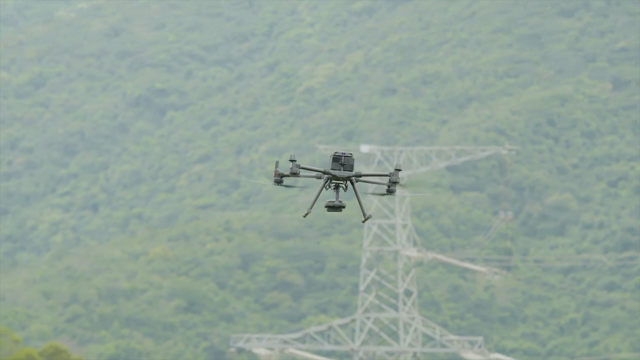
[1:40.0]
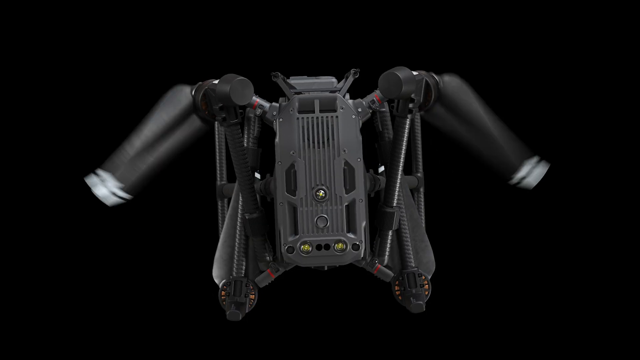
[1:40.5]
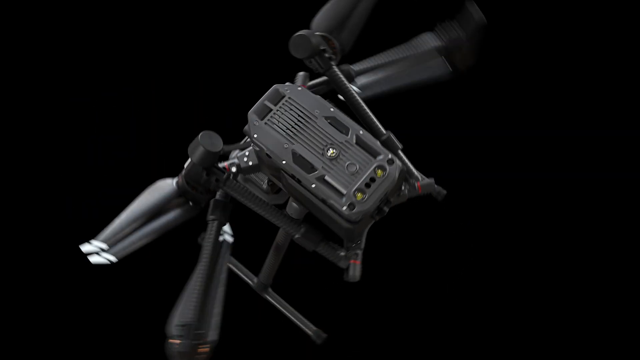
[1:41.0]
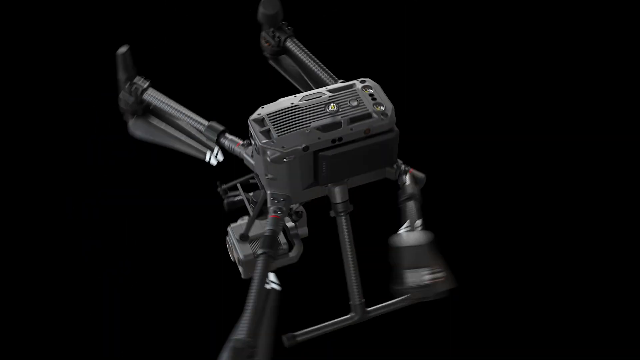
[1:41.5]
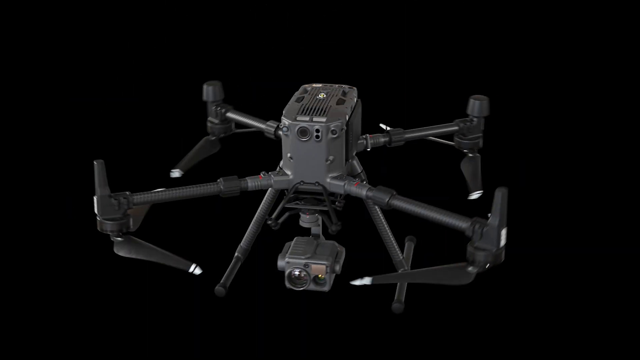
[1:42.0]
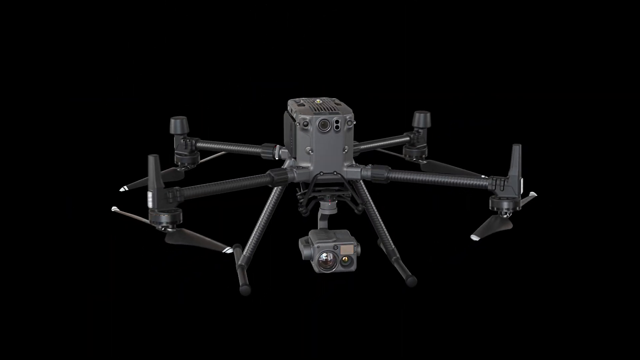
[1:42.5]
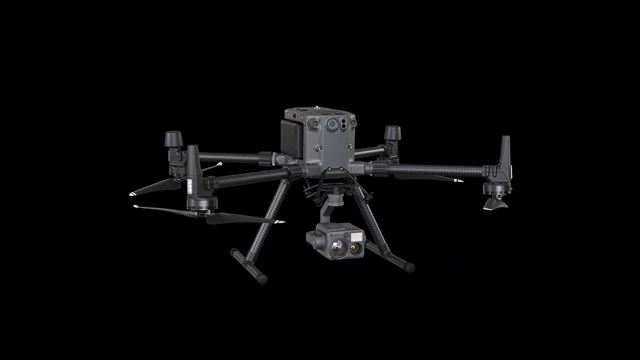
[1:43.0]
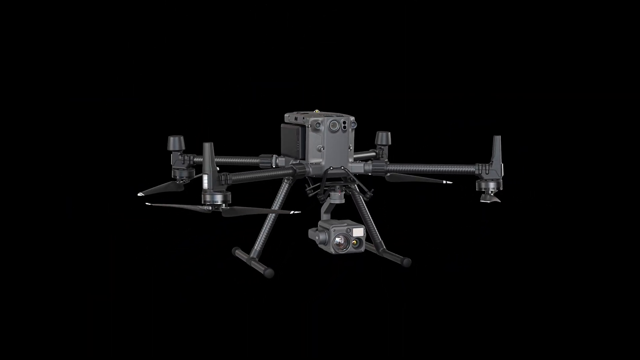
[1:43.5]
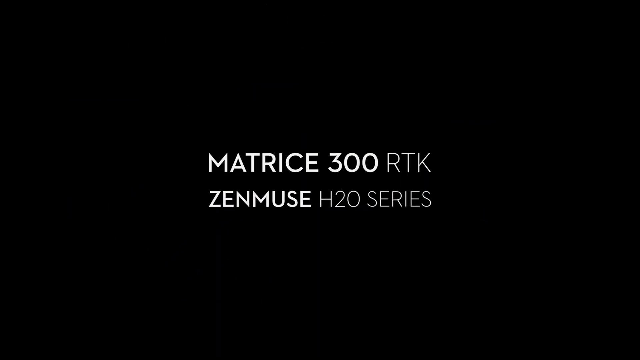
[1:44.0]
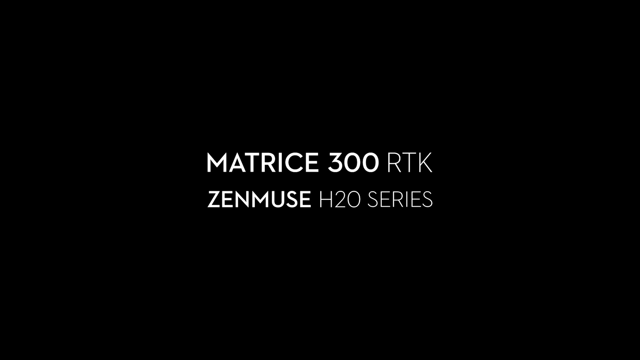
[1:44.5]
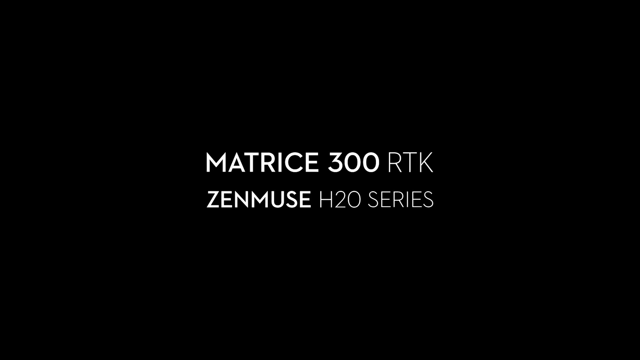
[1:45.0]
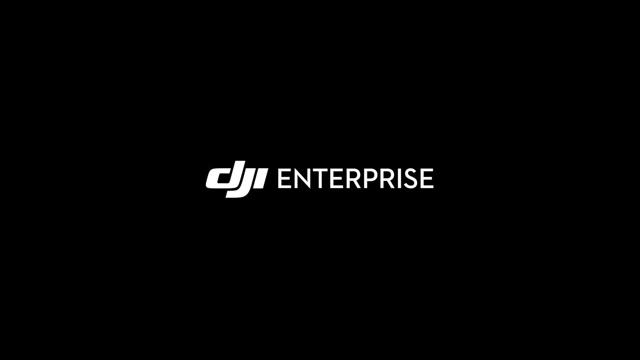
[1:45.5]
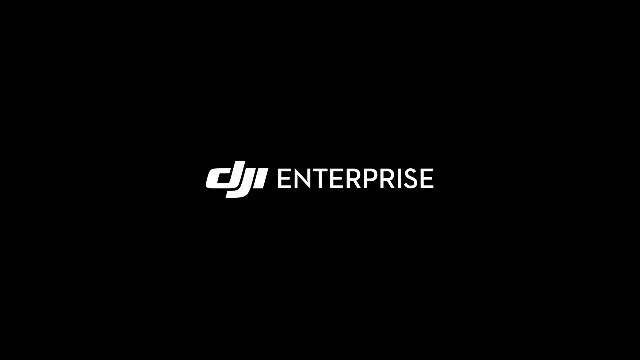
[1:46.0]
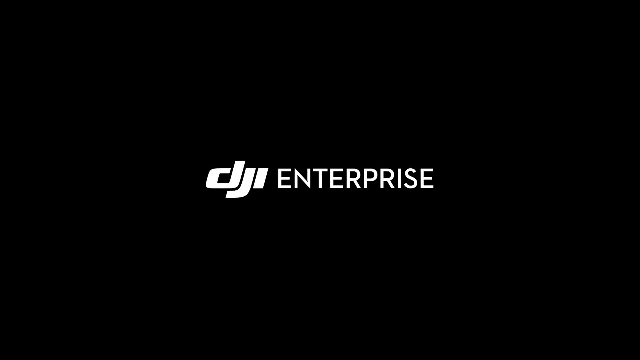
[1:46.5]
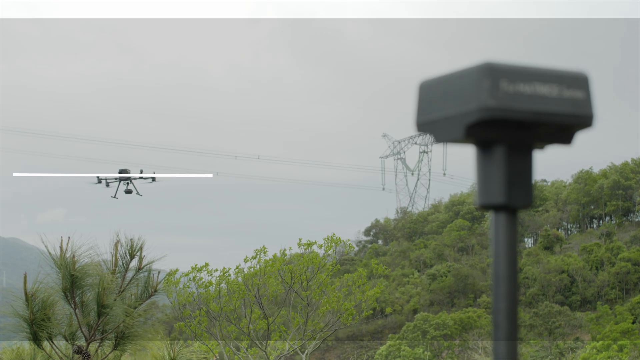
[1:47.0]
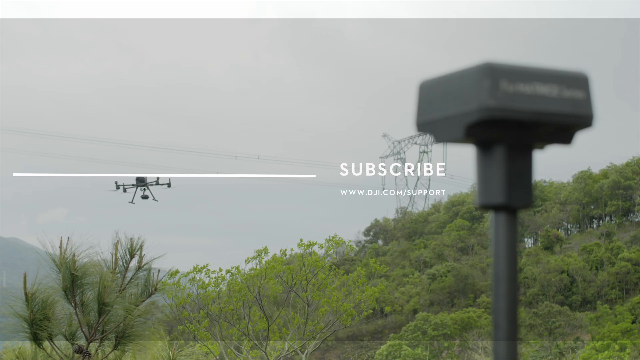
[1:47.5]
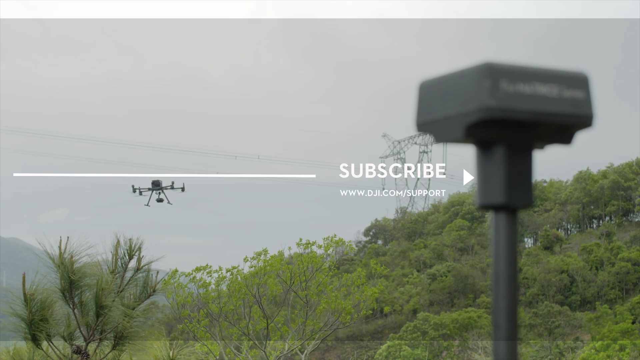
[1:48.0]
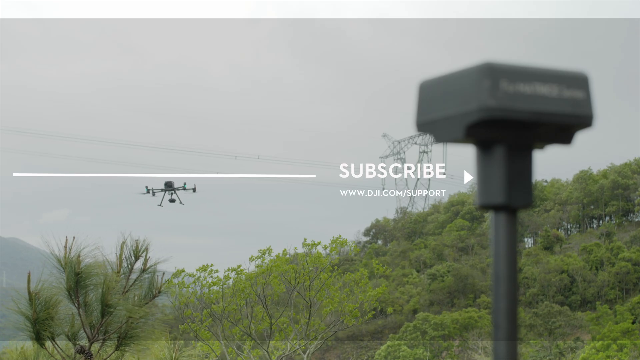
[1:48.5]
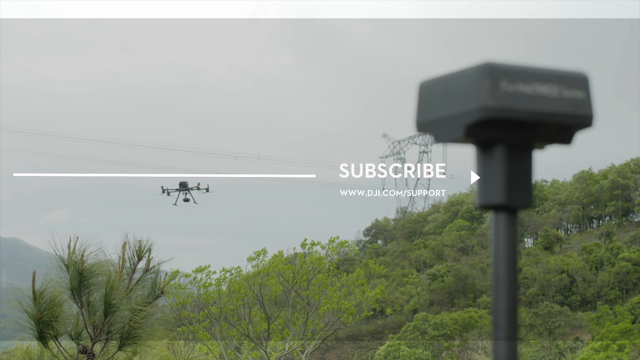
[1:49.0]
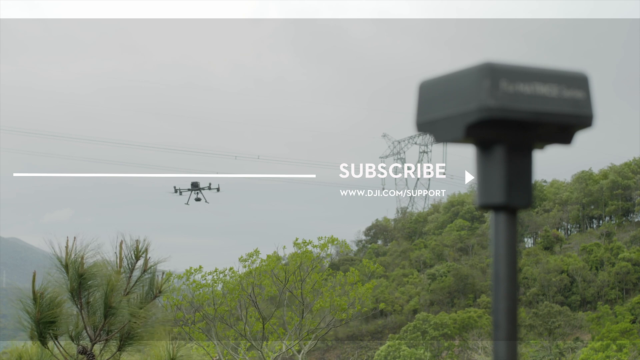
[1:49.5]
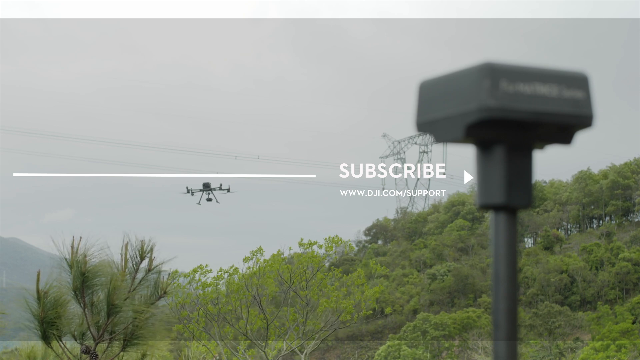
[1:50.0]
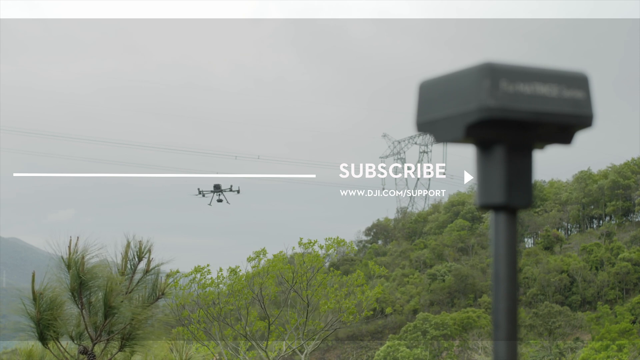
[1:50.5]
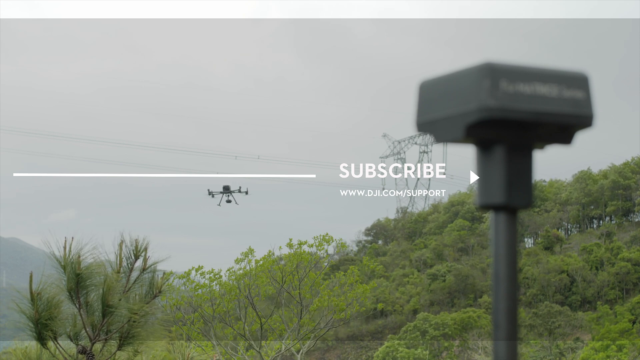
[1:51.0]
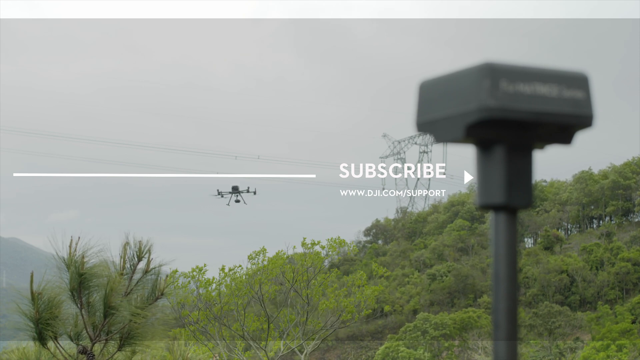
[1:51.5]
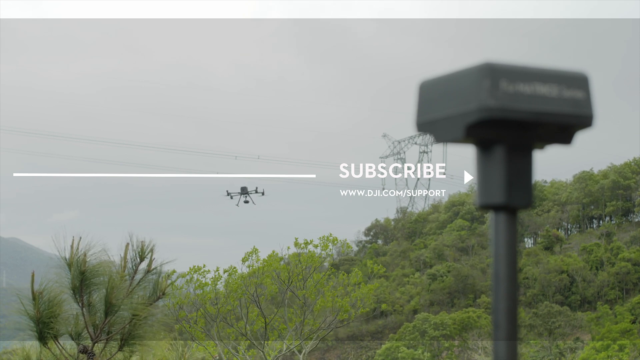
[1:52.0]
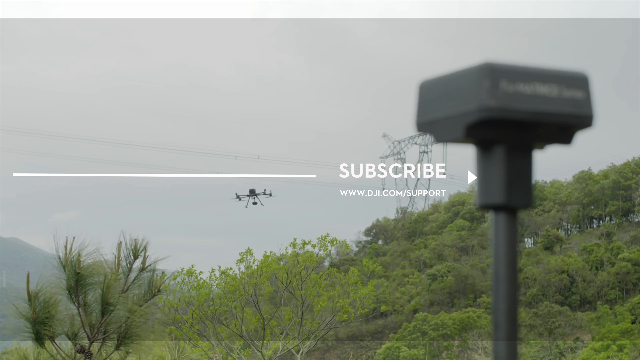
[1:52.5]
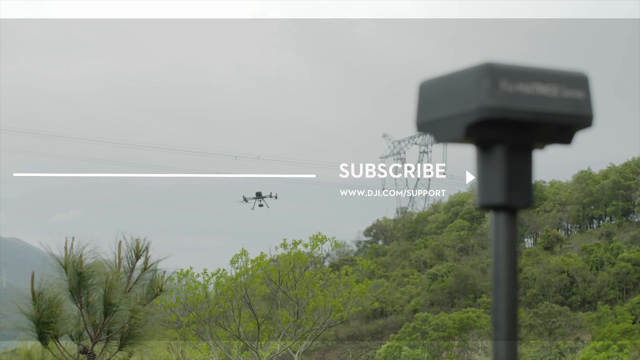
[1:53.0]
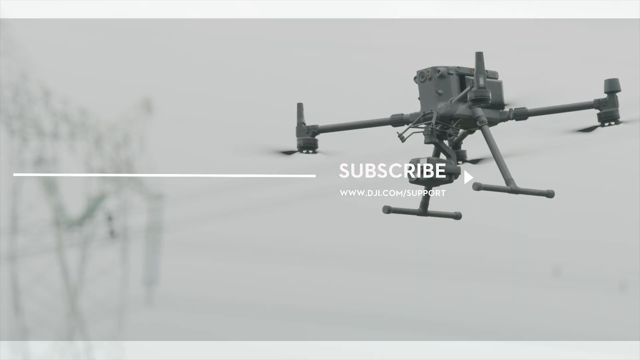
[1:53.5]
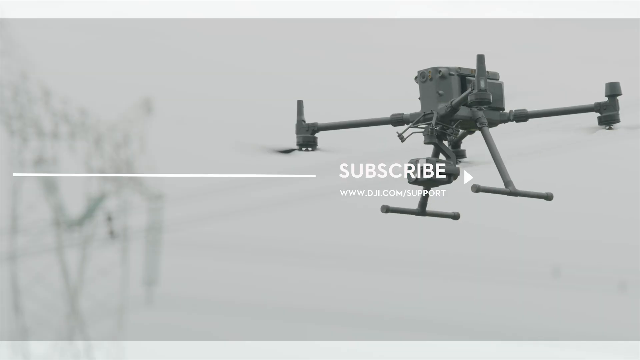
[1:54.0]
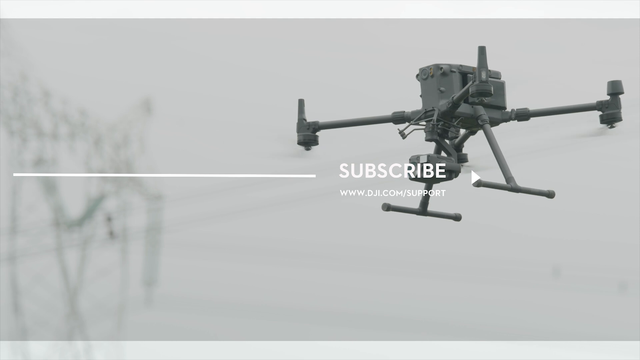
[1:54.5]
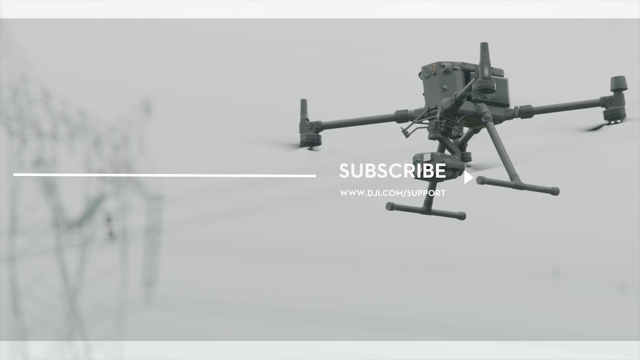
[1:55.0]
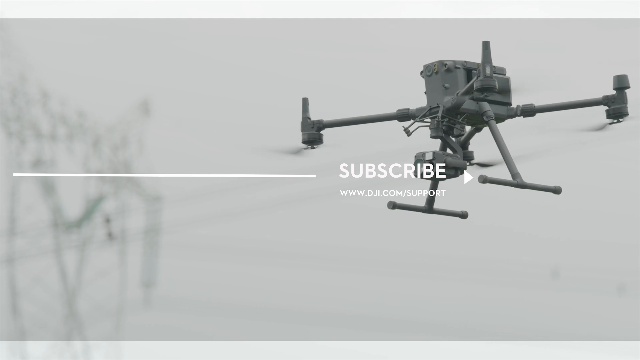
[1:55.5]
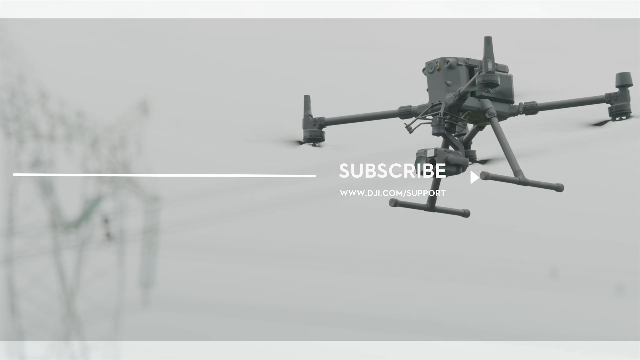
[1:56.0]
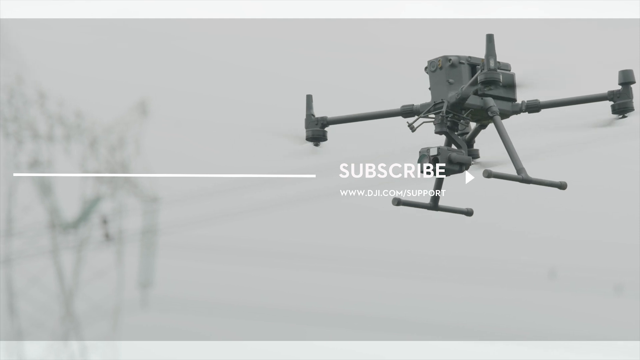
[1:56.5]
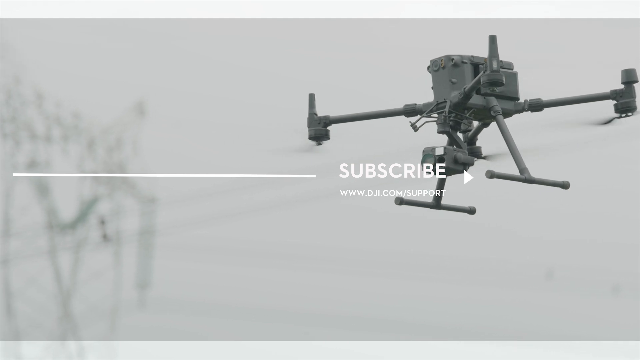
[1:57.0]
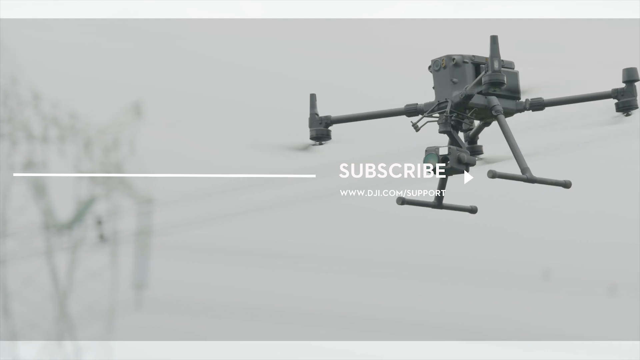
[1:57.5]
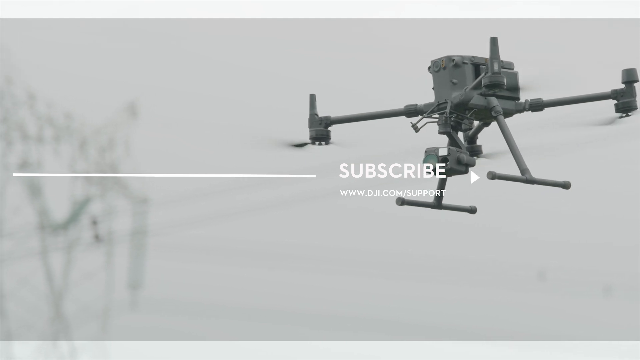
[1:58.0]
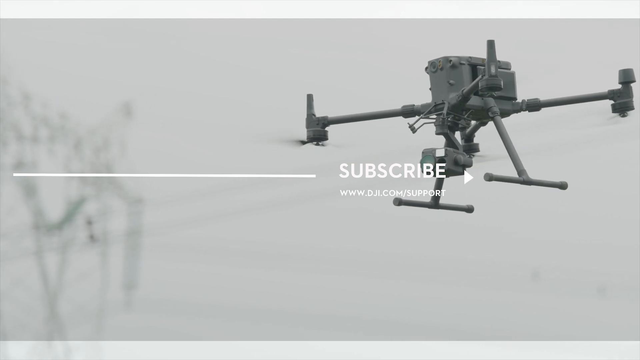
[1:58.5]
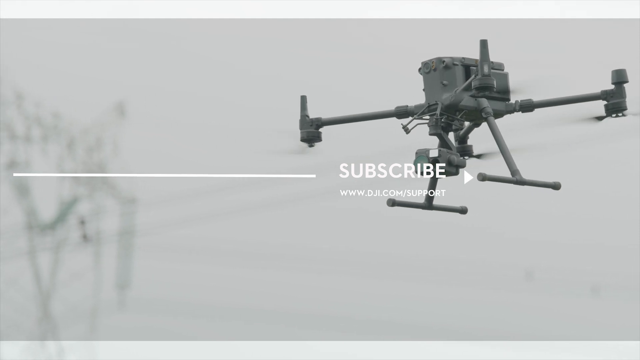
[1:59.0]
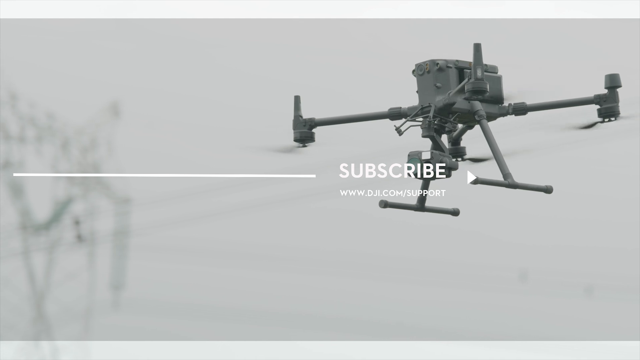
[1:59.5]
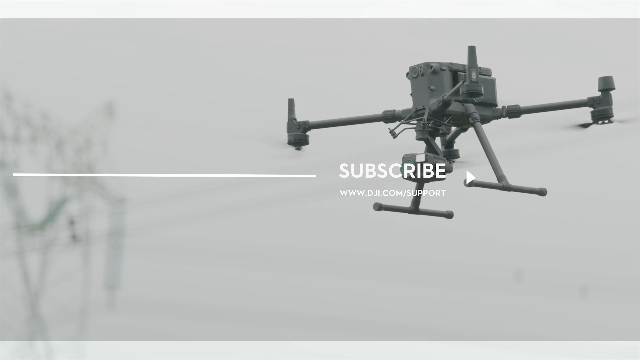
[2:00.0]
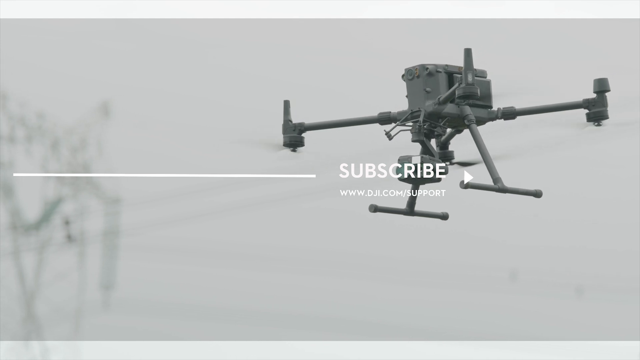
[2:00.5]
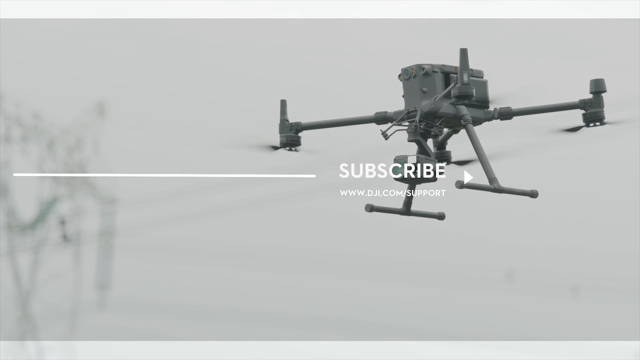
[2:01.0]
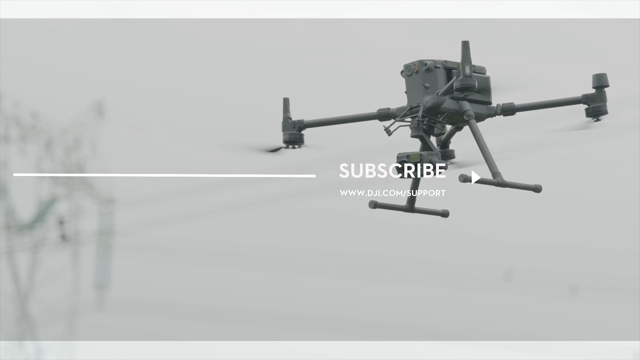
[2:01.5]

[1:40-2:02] The drone hovers in the sky, with the tops of trees in the background, floating past a pylon that moves from the center of the screen to the right. Next, the drone itself is shown against an entirely black background, unfolding, showing how it packs away into a small cube and unfolds. In the center of the screen, in capitals, text reads "matris 300 rtk", below that "zenmuse h20 series", and above that "DJI Enterprise". Next comes an image familiar from the opening sequence: trees, a greyed-out sky in the background, and the drone moving from left to right on the left side. On the right-hand side, very close to the camera, is a grey transmitter, its top just below the top right of the screen and its pole going out of the bottom. Next to the transmitter, the pylon is visible in the background. Across the center of the screen, just above the drone, is a white line taking up about half of the screen. To the right of that, written over the pylon next to the transmitter, is "subscribe" in white capitals, and beneath it "www.dji.com/support". A white arrow appears to the right of the subscribe graphic, motioning to the right and back. The scene changes to an image of the grey drone with its feet, with subscribe text at the top right of the screen, the white line across the screen, and a grey sky in the background.